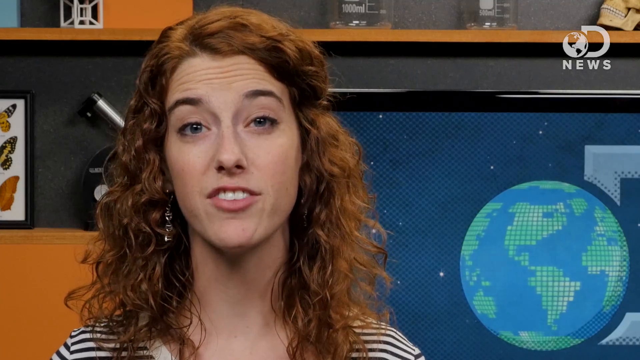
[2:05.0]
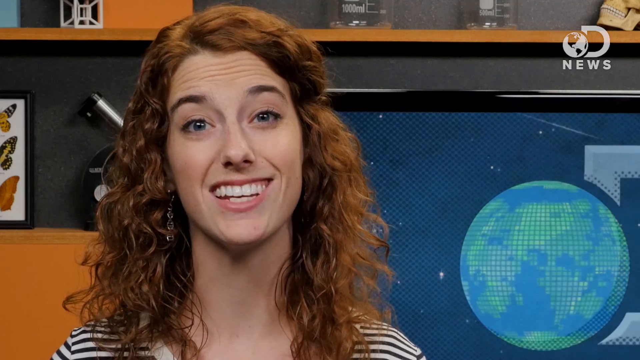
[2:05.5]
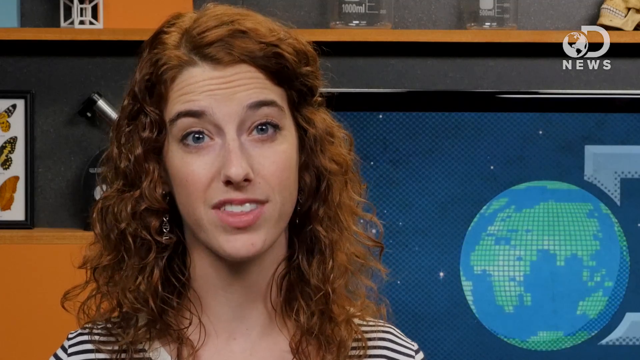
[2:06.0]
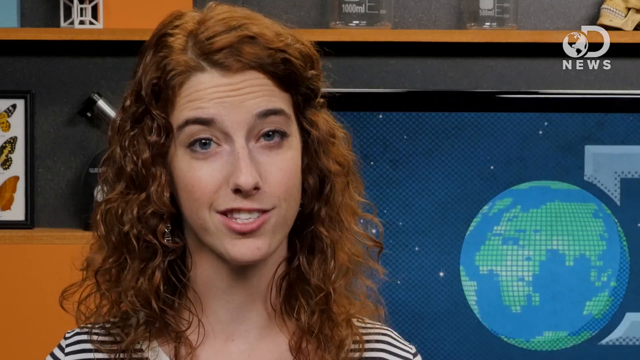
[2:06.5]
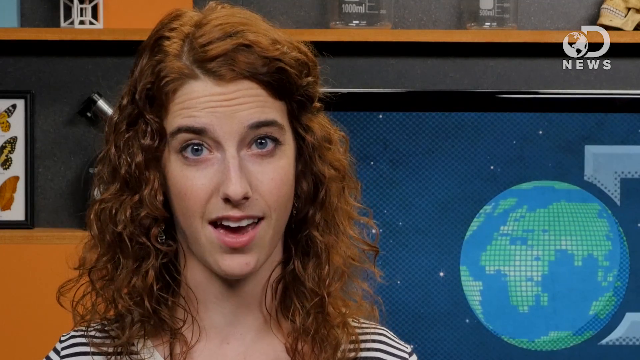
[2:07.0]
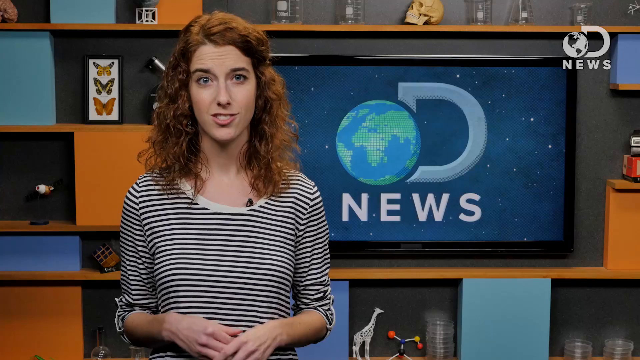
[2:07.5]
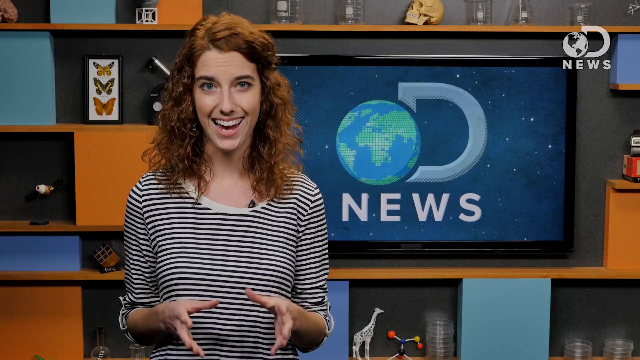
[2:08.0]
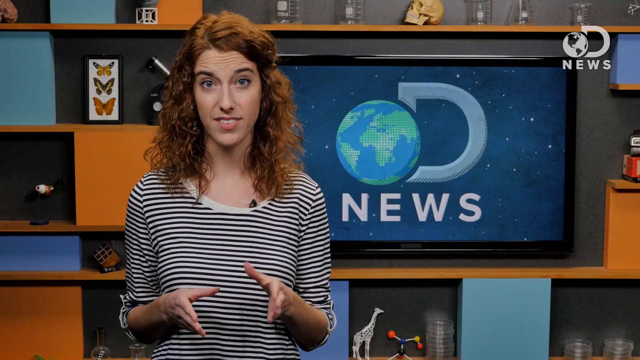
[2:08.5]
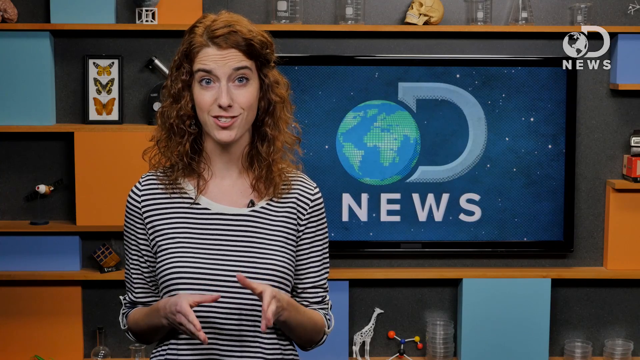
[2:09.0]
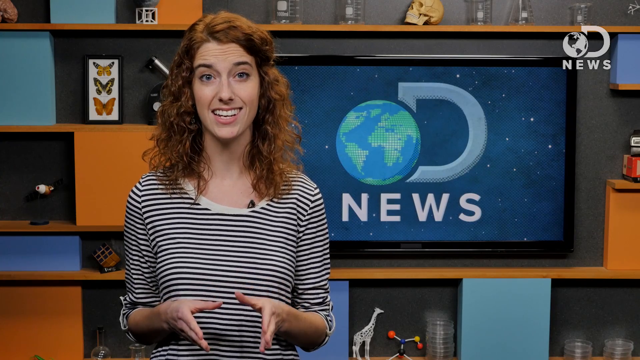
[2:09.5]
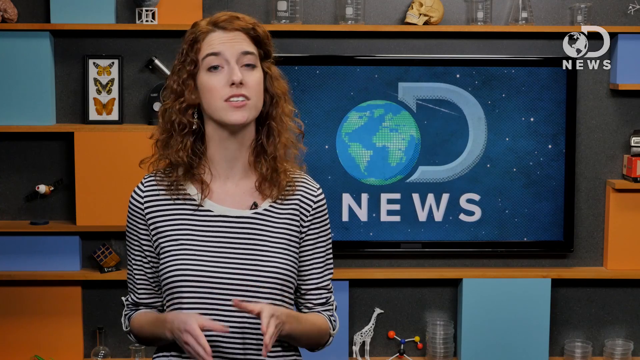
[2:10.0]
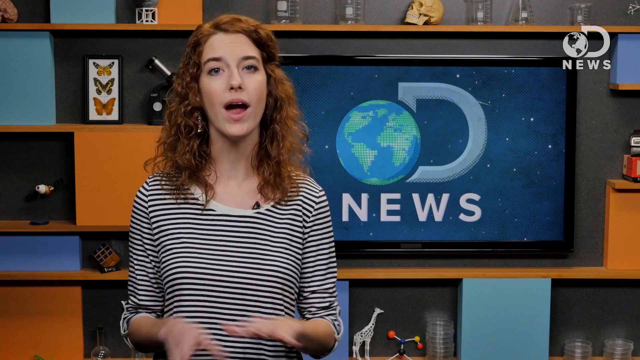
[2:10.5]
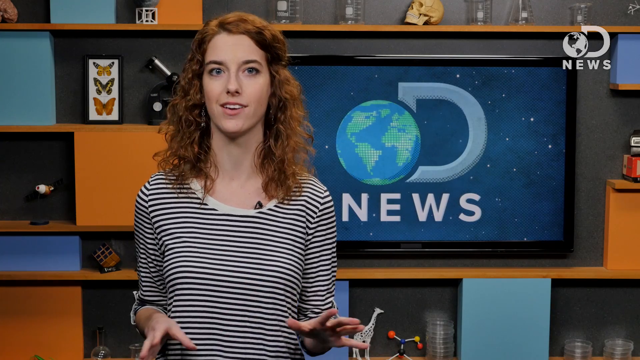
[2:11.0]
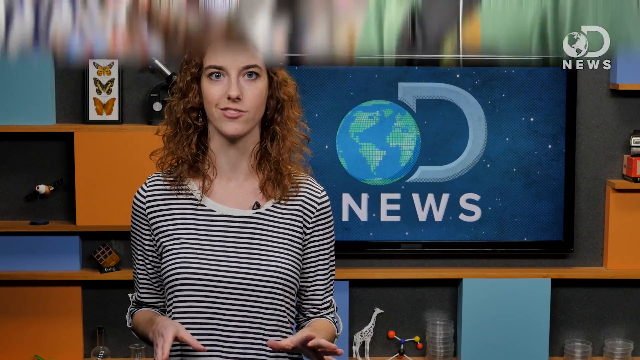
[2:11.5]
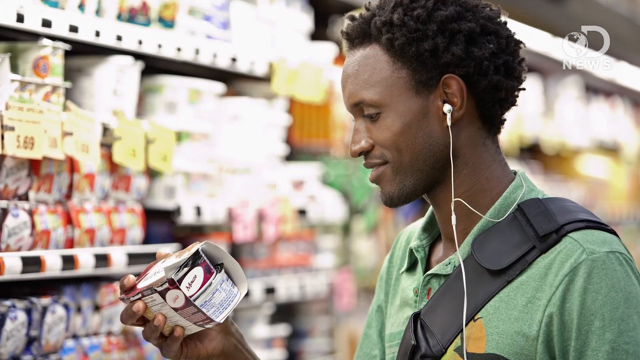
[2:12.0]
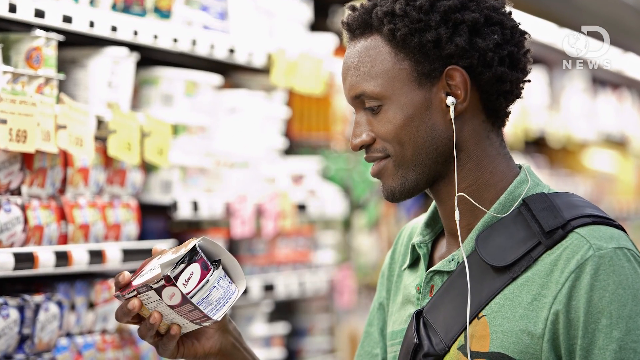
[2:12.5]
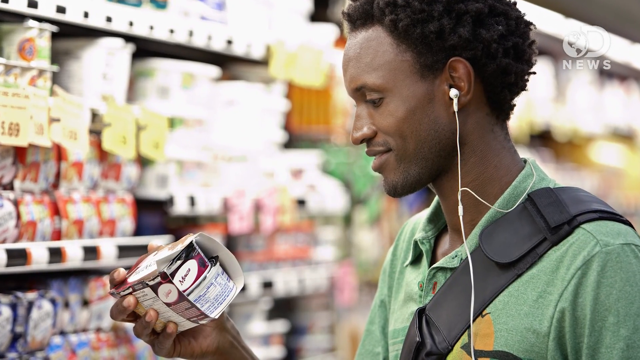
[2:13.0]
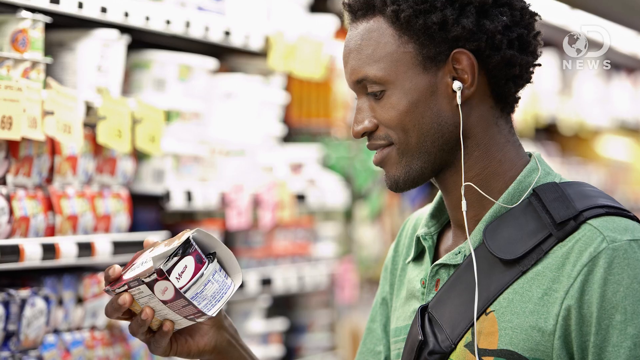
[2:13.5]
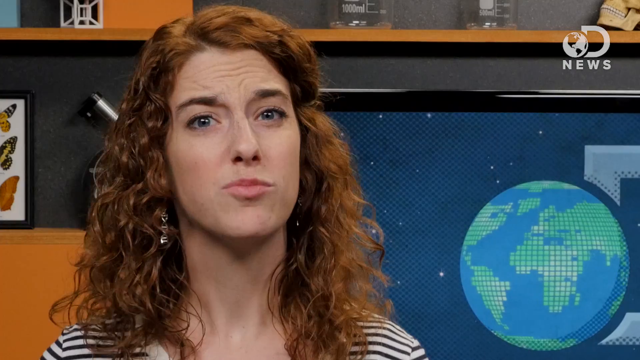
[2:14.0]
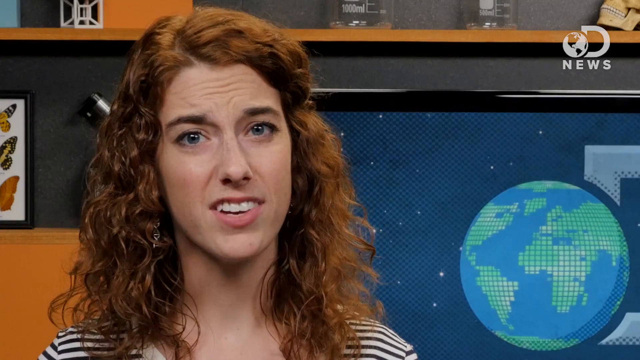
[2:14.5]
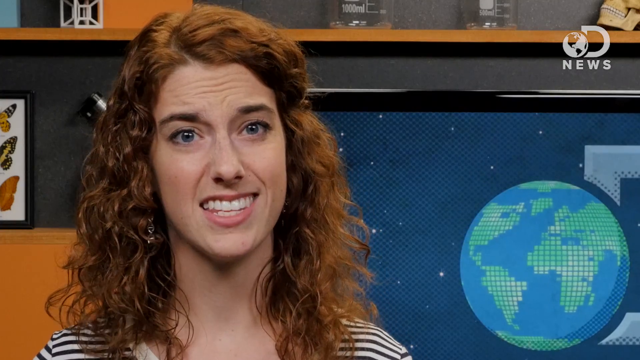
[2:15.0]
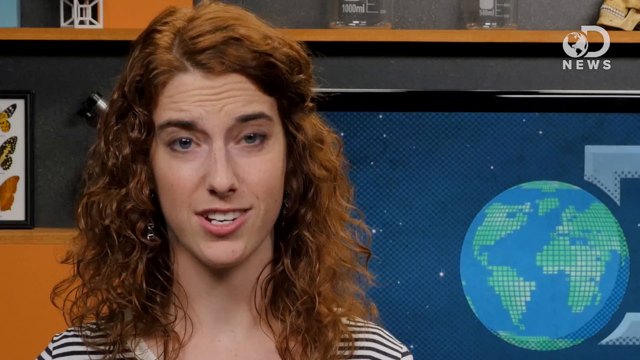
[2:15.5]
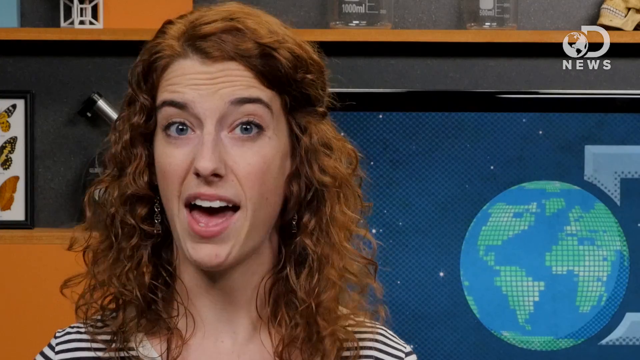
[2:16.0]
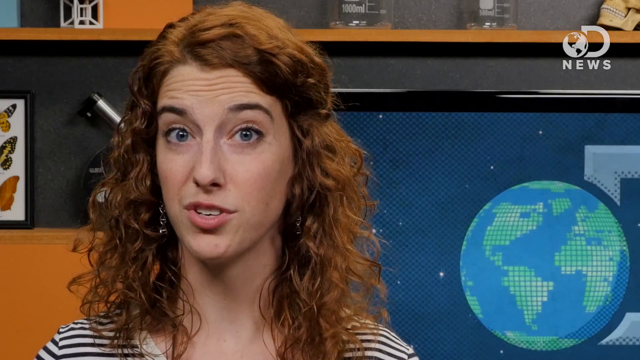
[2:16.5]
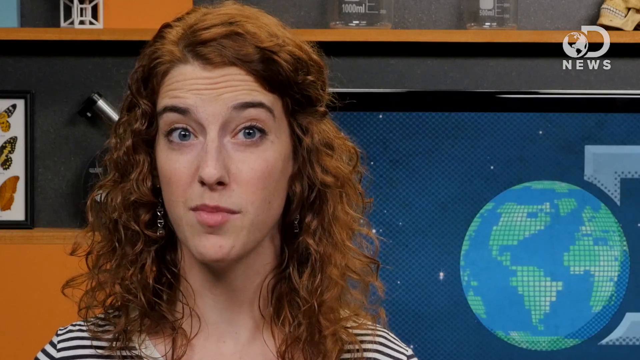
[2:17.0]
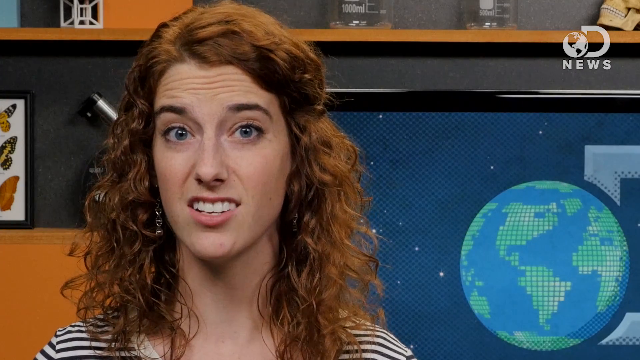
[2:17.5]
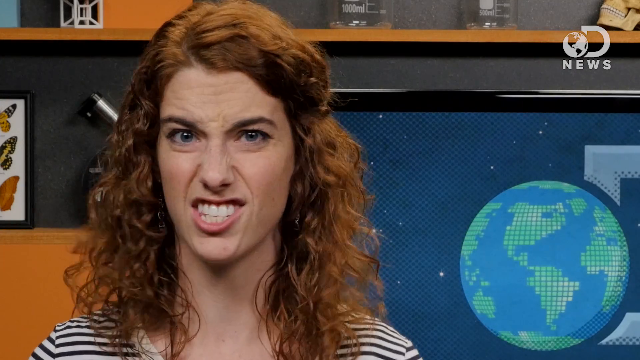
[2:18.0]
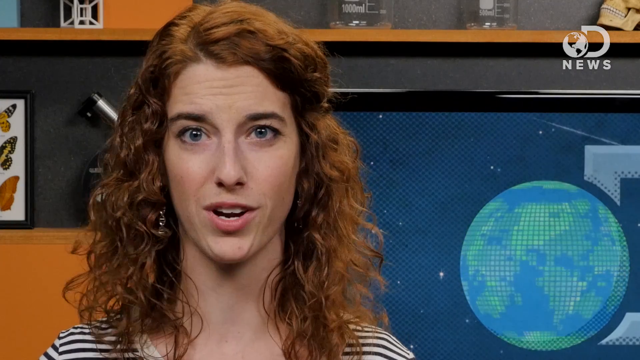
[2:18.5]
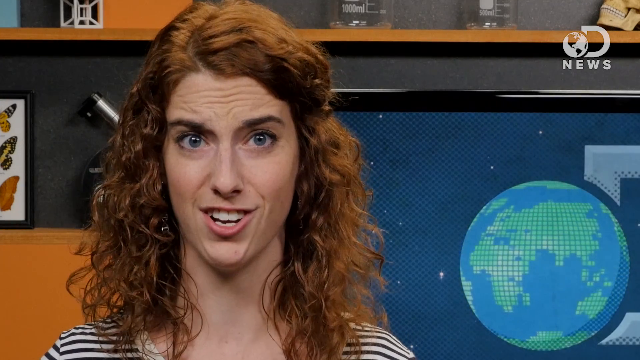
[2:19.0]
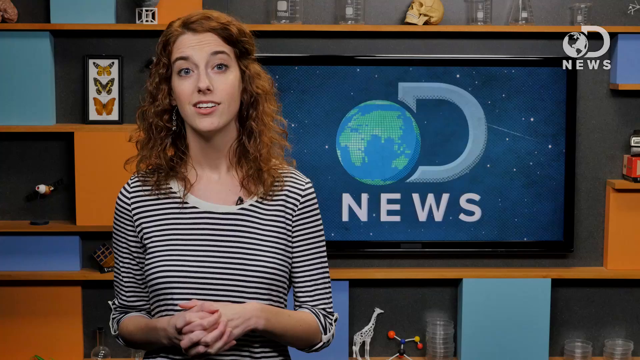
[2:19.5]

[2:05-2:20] A young woman newscaster with long red hair speaks. A man looks at yogurt in a store. The video goes back to the woman, who is in front of a flat screen TV showing a rotating earth with a capital letter D next to it and "news" underneath. She talks a lot with her hands. The man in the grocery store has earphones and looks at a package of yogurt. The video goes back and forth between her and the man, who is by shelves filled with food in what looks like a grocery aisle, smiling and looking at what is kind of a four-pack of yogurt in his hands.